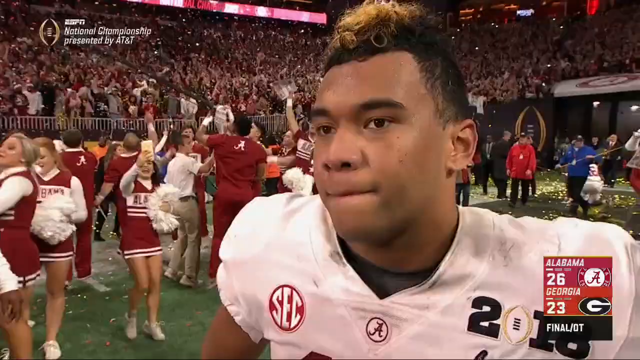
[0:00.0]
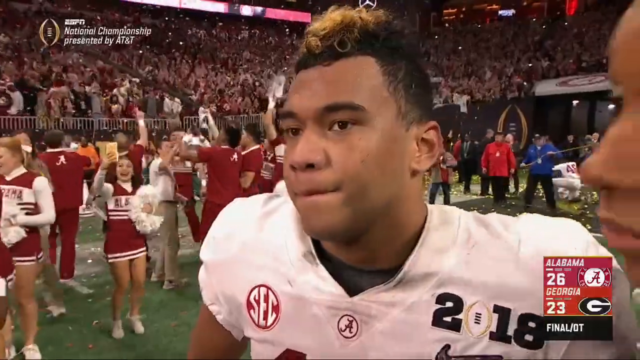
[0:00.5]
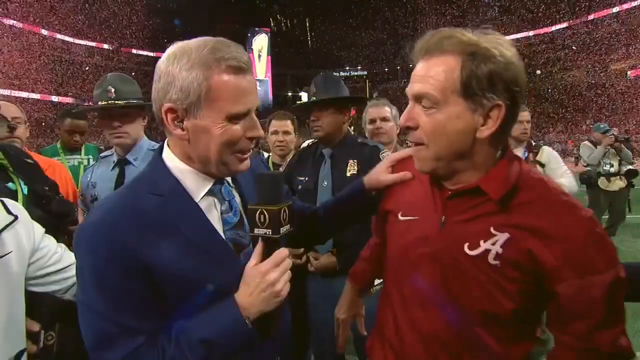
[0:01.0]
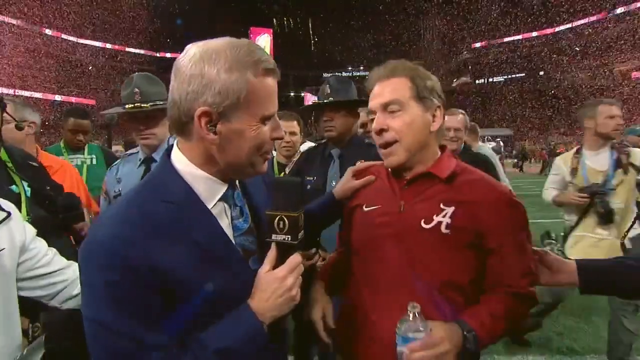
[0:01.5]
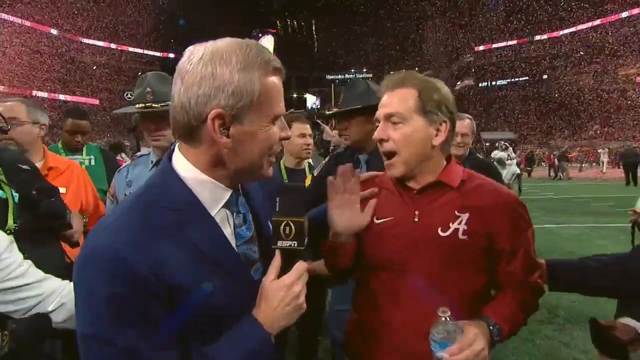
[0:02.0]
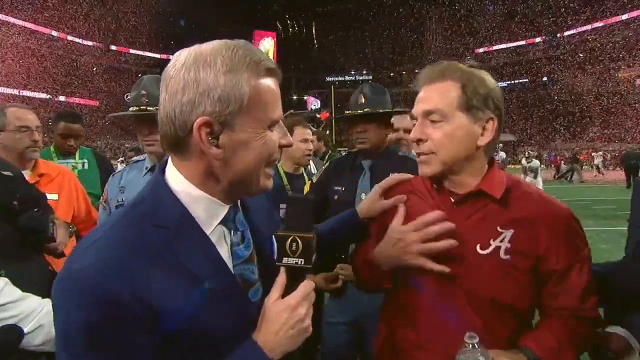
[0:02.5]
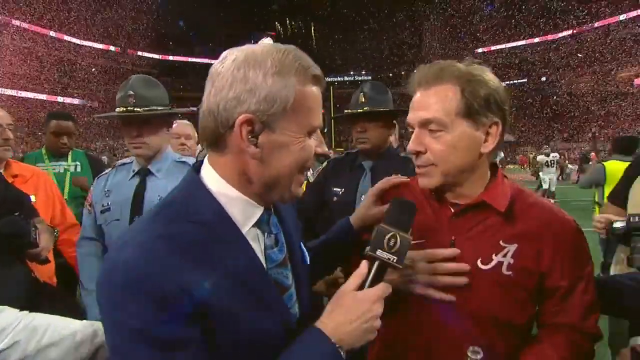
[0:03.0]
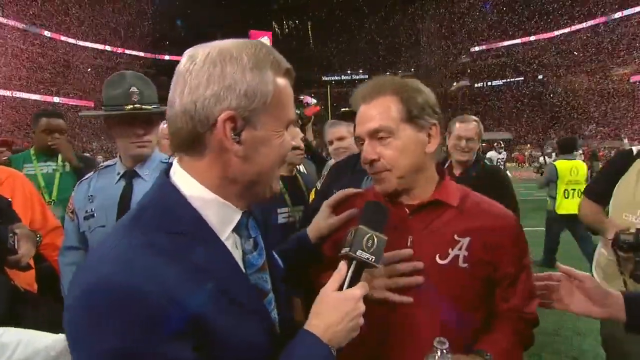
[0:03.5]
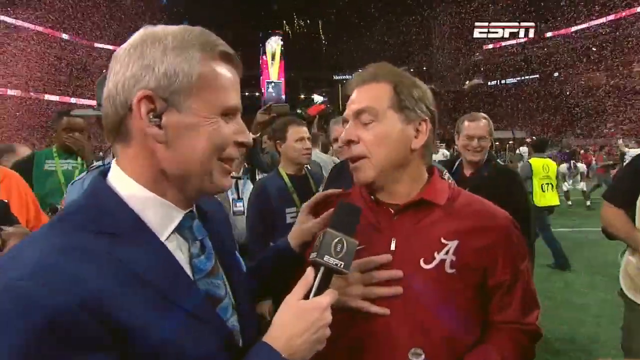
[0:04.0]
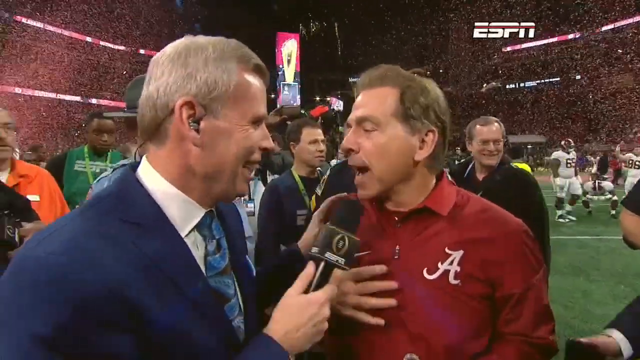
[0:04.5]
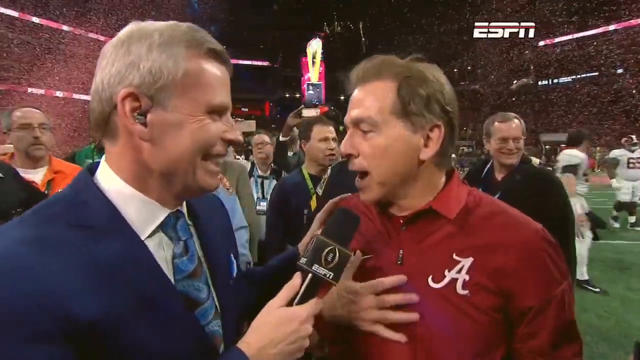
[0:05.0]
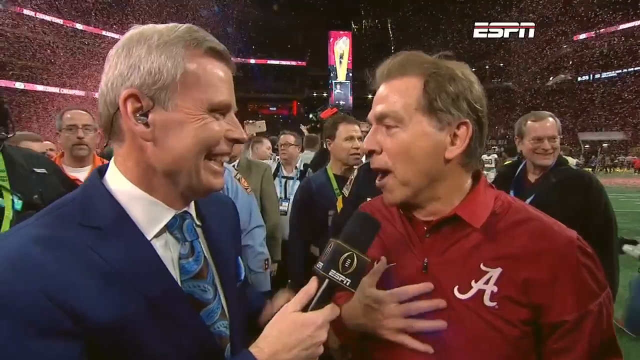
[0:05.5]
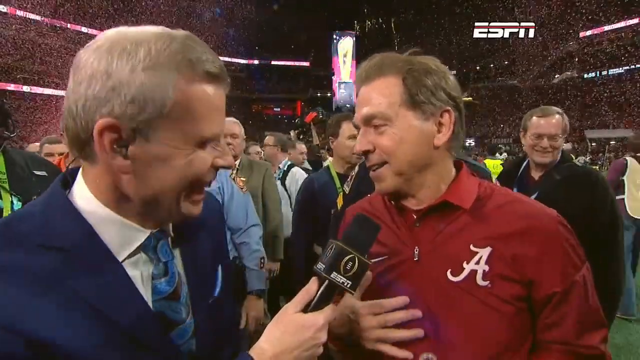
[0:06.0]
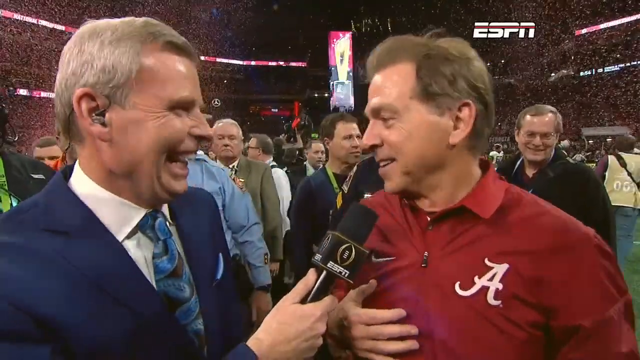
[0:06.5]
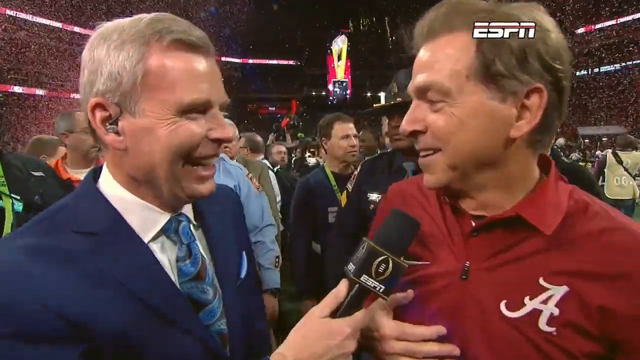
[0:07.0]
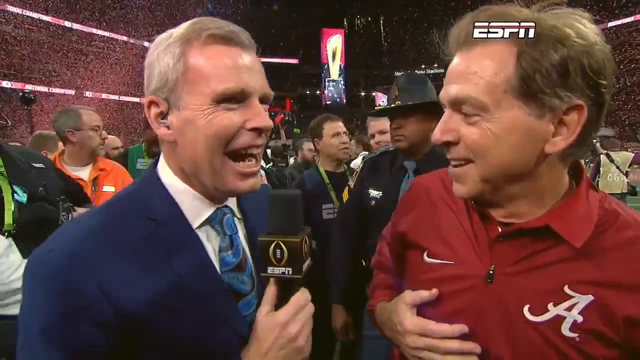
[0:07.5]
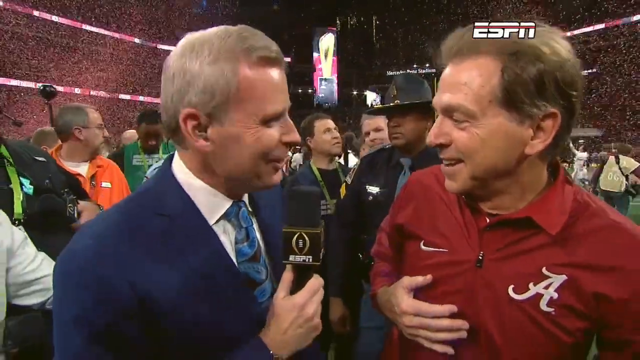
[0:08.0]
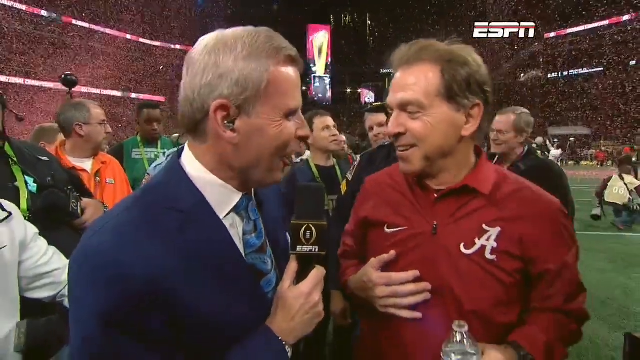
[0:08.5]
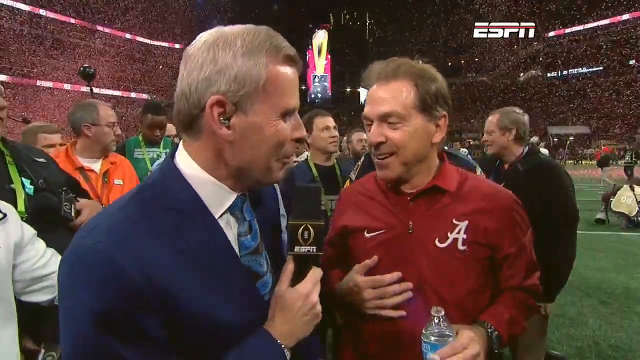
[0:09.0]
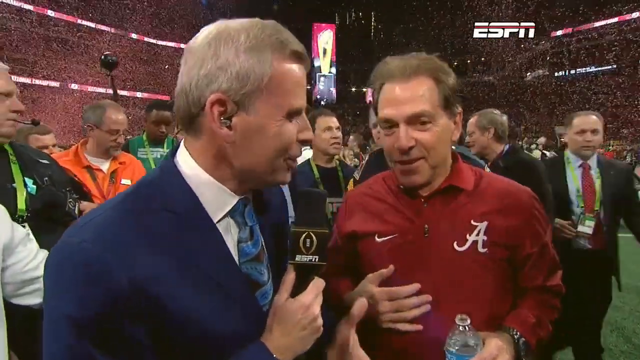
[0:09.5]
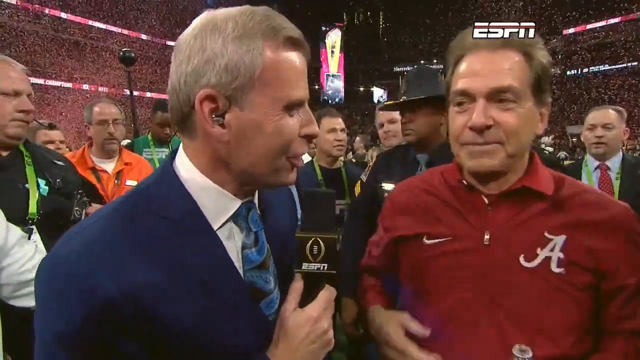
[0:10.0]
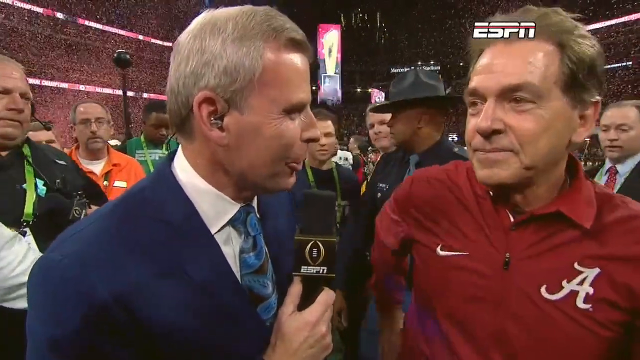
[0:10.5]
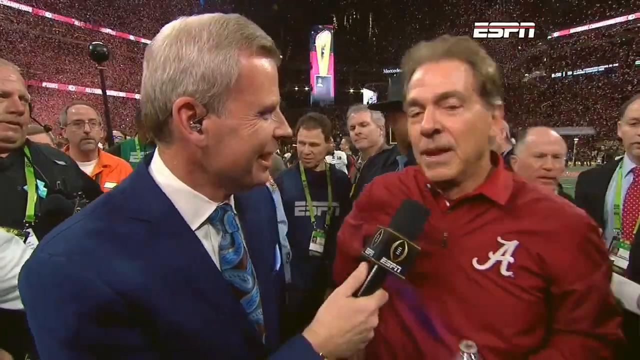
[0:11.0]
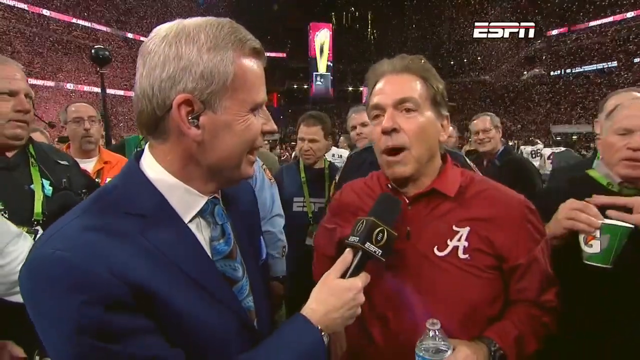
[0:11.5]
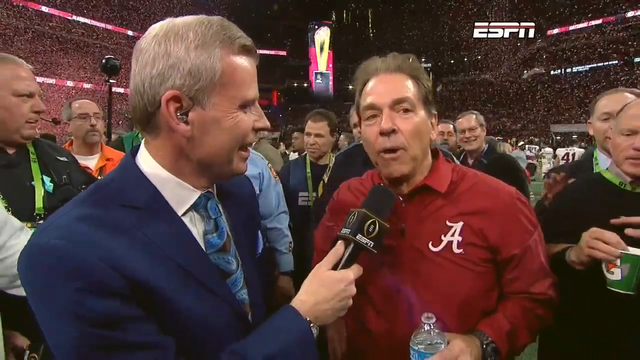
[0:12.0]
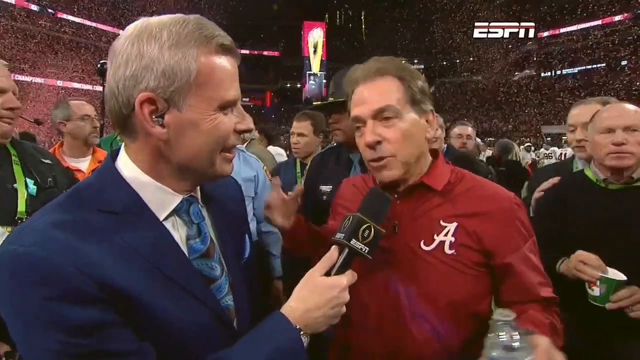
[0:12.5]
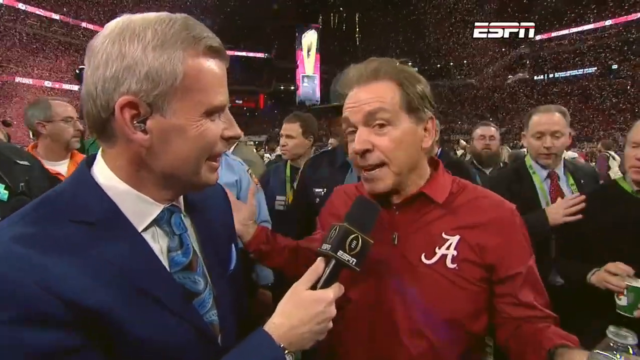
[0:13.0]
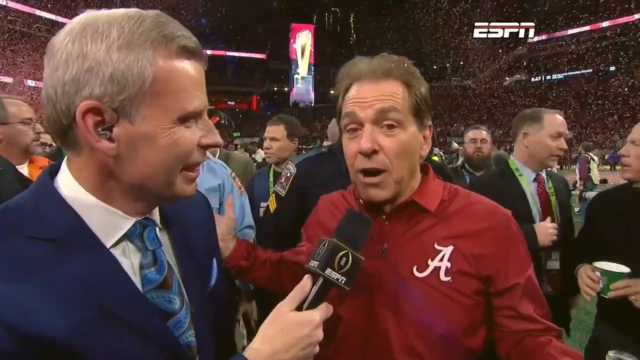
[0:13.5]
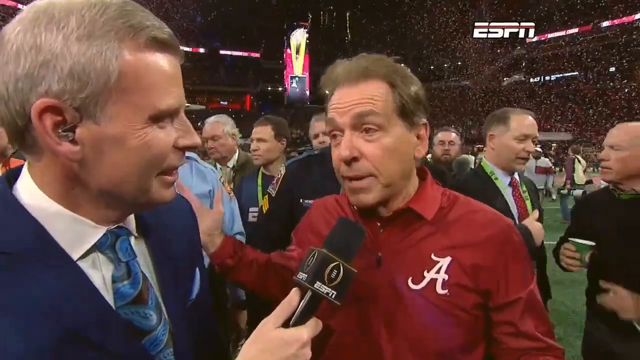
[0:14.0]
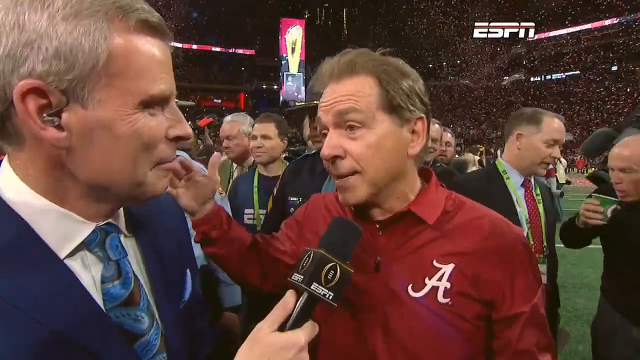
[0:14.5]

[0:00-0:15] What looks like an ESPN post-game interview shows Alabama coach Nick Saban on the football field. Confetti is in the background, and people are congratulating the coach, who seems proud. He is the only one being interviewed by the ESPN commentator, who has a microphone, but plenty of people are in the background, including a couple of players, video broadcasters, and other commentators or officials. Everyone seems excited.